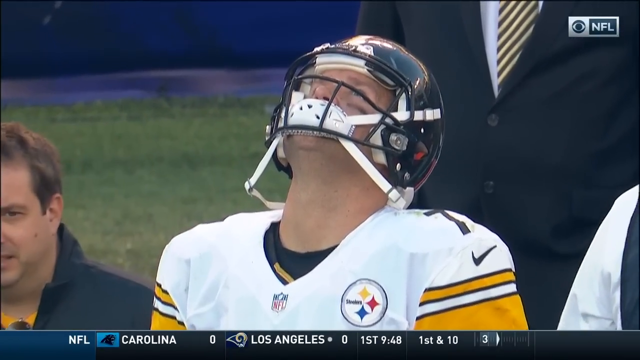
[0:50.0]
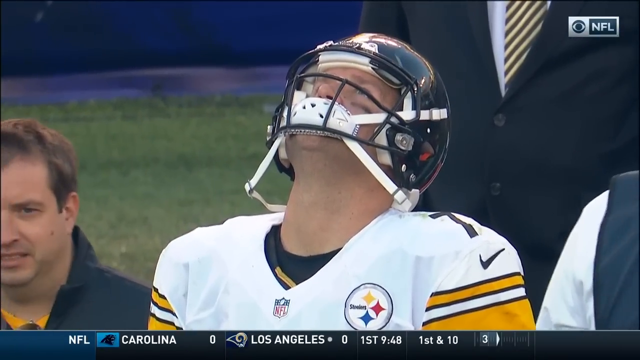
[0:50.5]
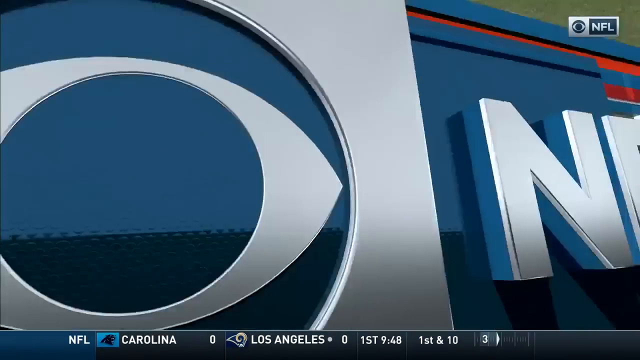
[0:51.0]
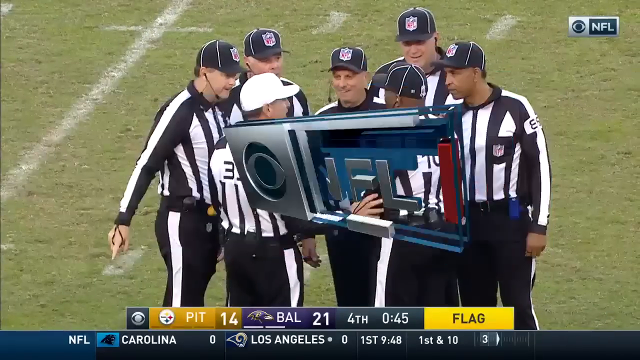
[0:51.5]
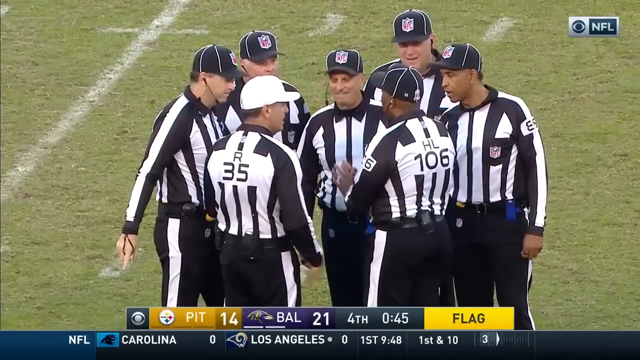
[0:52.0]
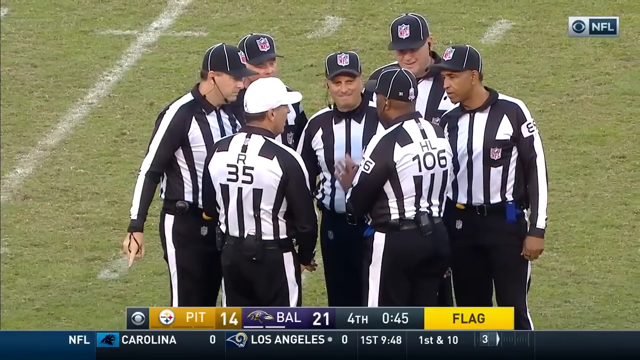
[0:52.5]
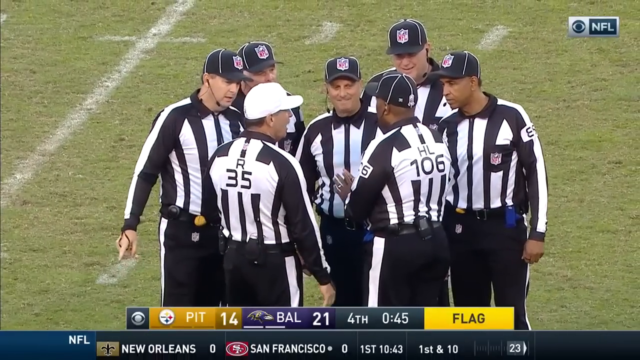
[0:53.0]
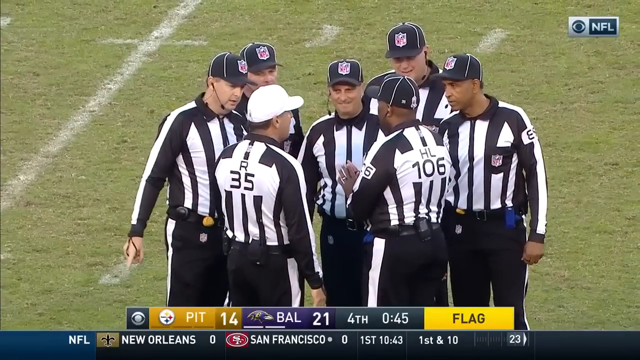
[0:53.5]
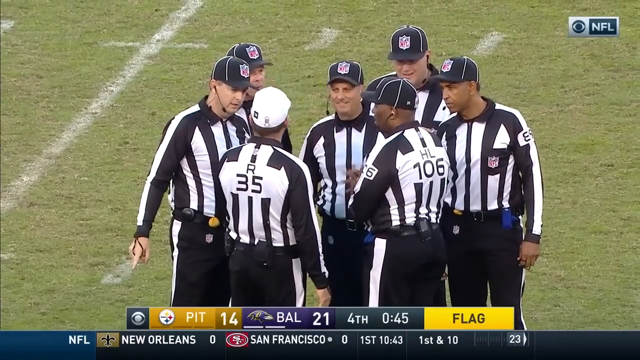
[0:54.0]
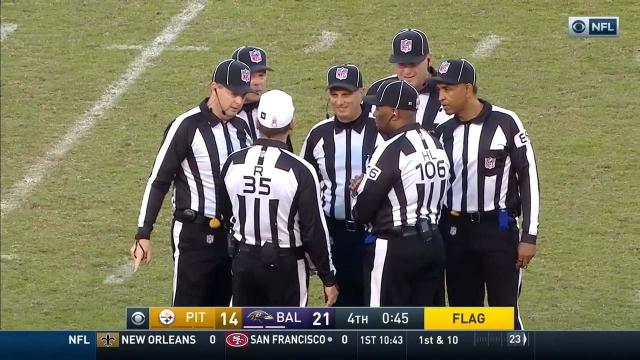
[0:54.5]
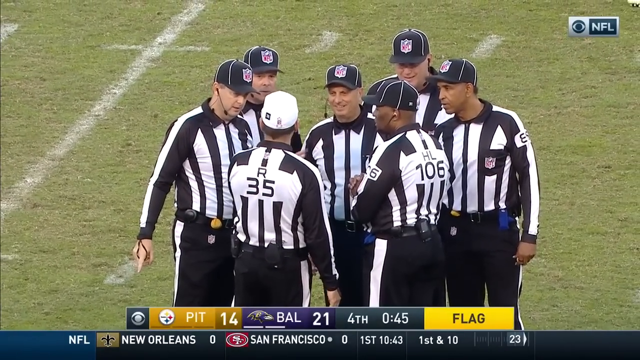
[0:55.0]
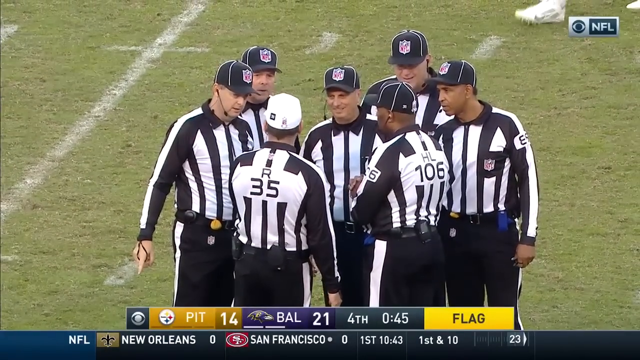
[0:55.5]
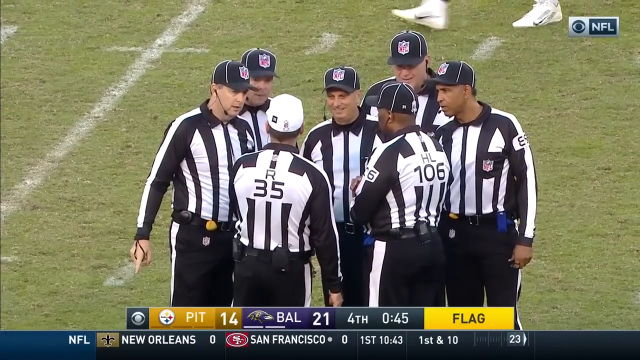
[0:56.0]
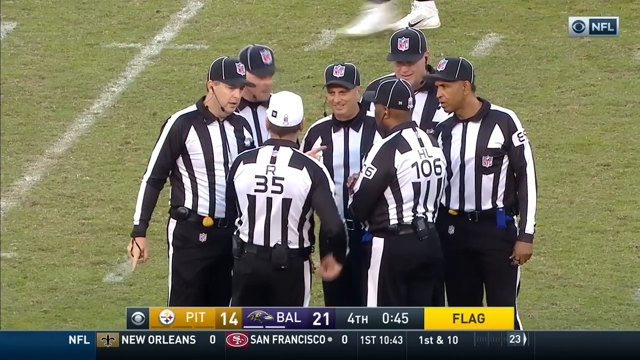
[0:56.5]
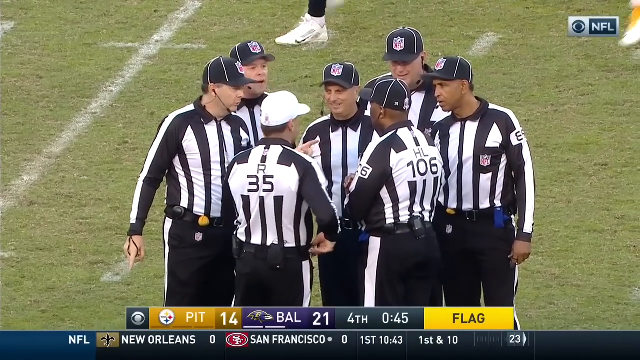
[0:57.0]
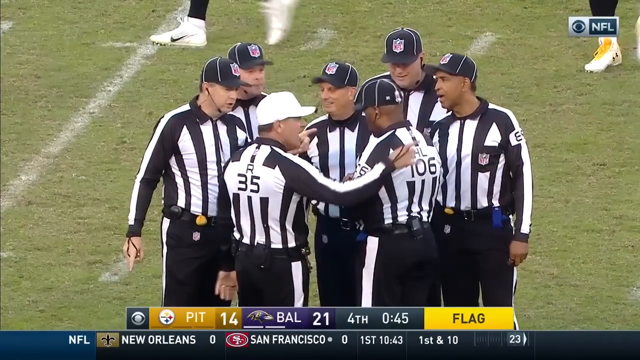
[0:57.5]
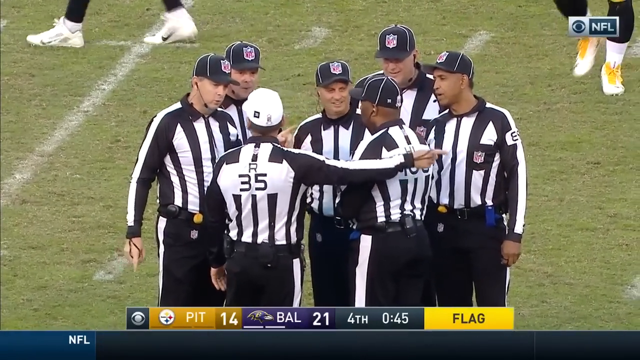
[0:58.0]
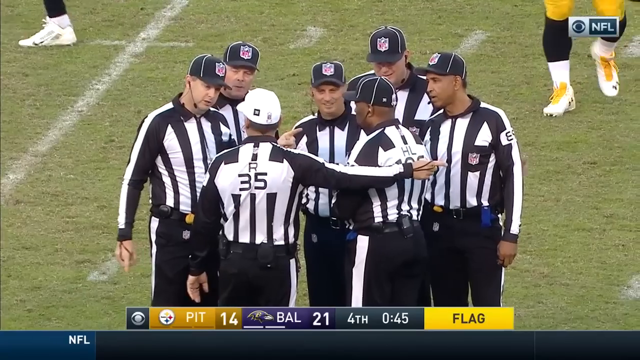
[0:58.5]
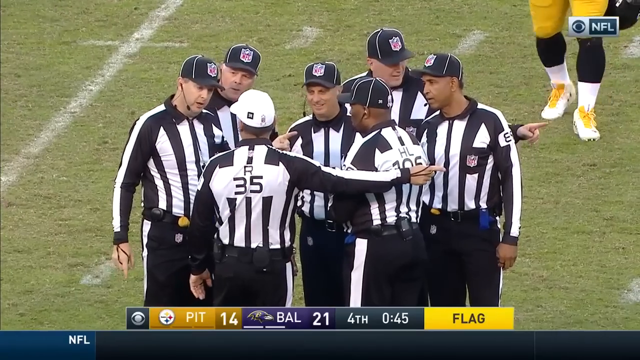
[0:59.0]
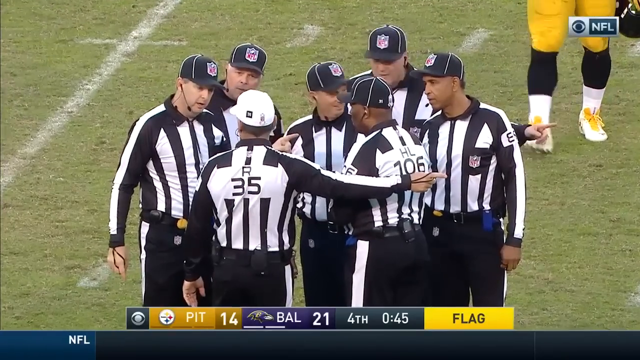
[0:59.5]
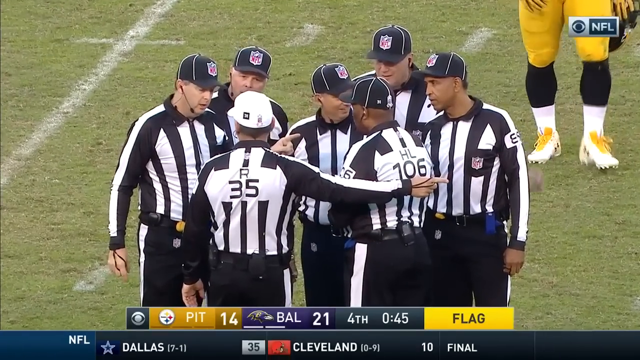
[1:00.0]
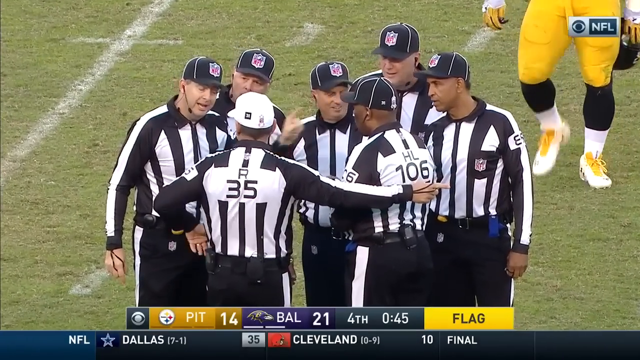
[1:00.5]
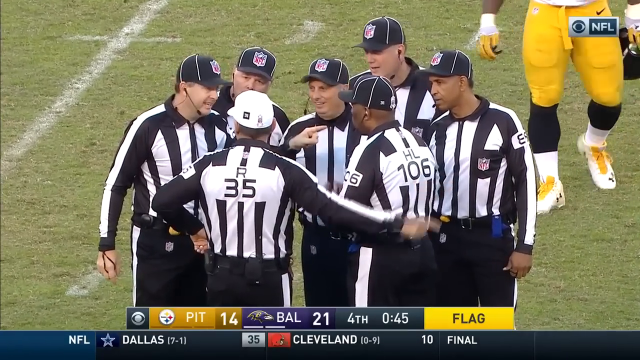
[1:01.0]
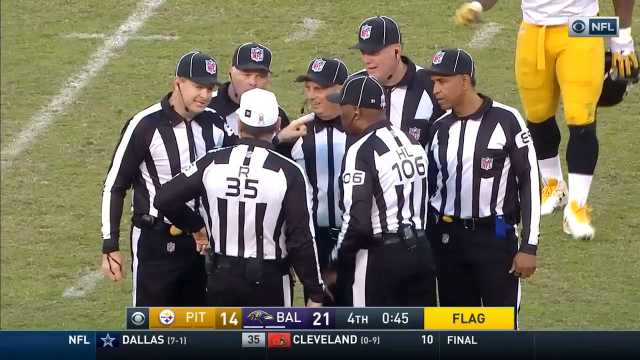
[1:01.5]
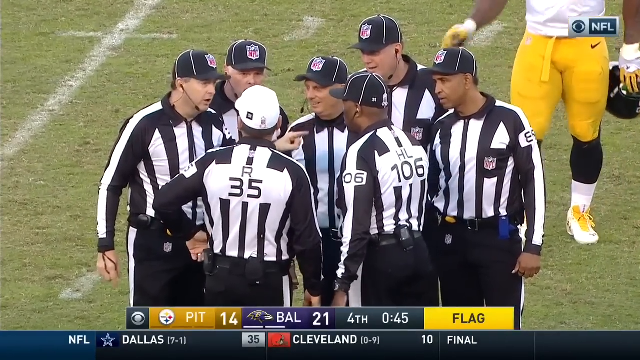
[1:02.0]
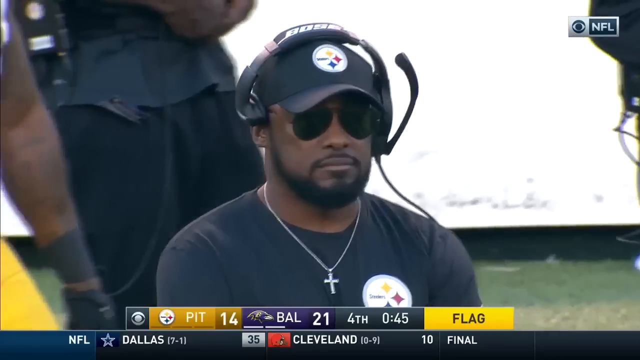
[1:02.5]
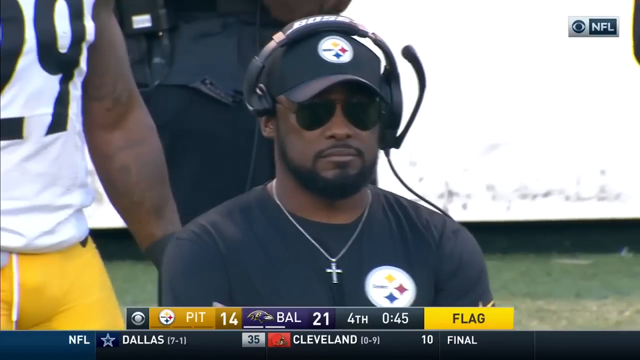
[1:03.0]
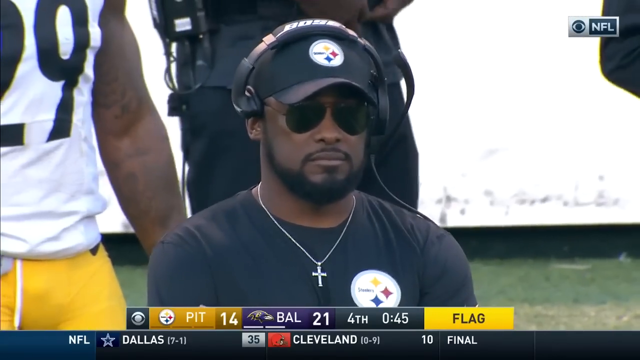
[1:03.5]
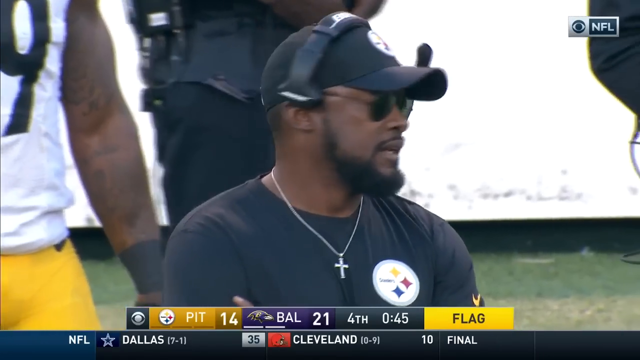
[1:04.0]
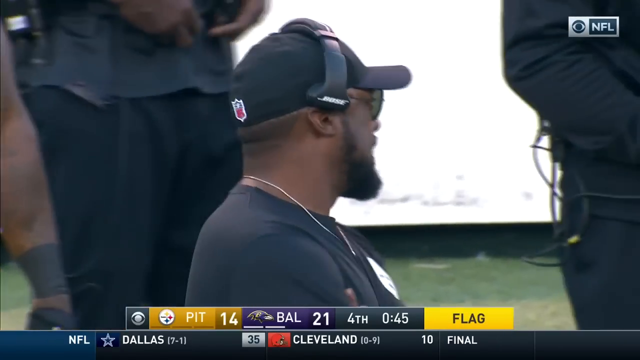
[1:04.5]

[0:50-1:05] Ben Roethlisberger is still sitting with his head back, looking frustrated and annoyed. A flag is on display, and the referees are gathered together; a couple of them have smiles on their faces, and at least a couple are laughing. The referees talk, apparently trying to figure out what the flag is and what is to be done. Mike Tomlin, the Steelers head coach, is also shown for a little while, looking not too happy.